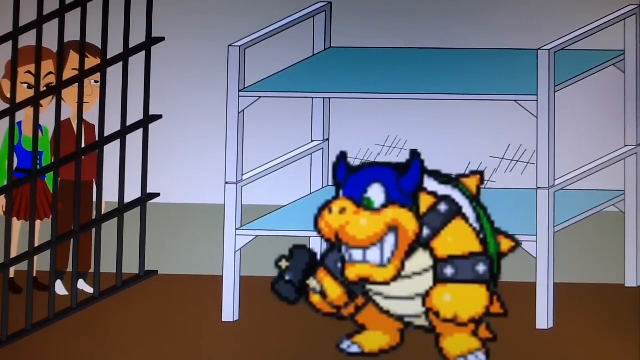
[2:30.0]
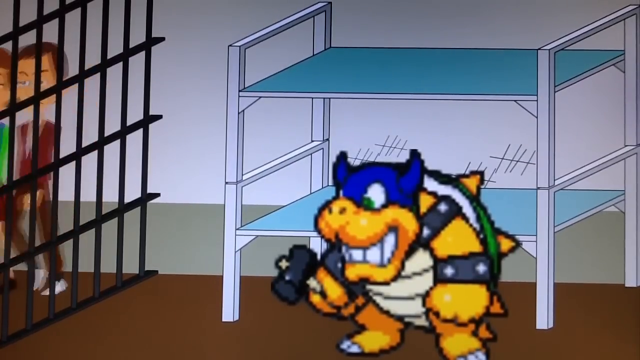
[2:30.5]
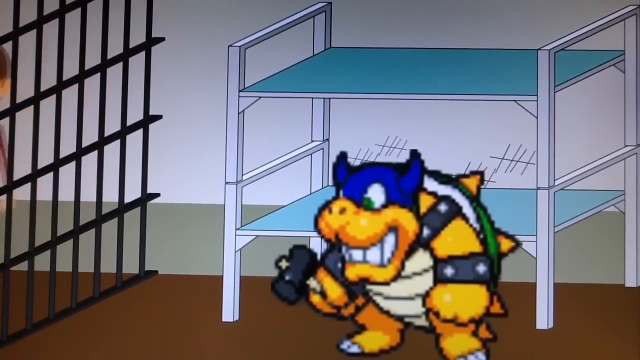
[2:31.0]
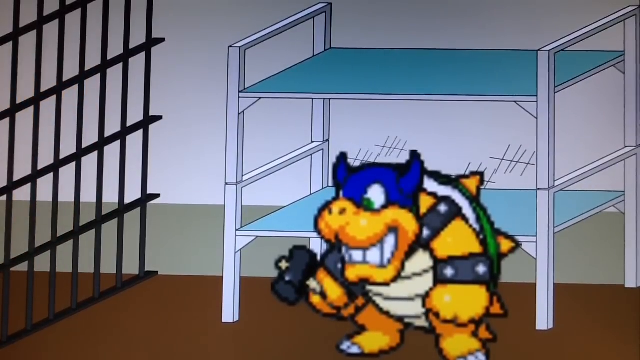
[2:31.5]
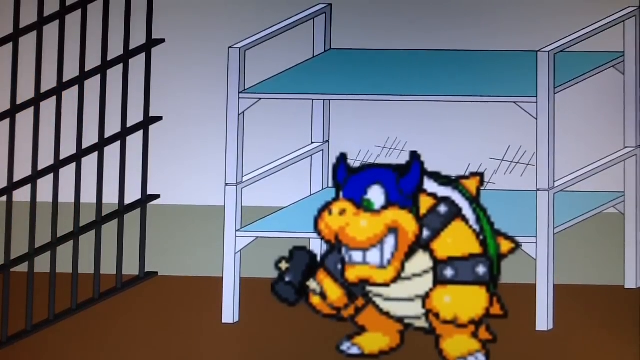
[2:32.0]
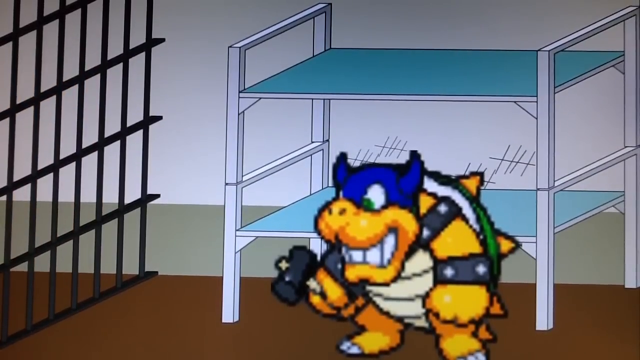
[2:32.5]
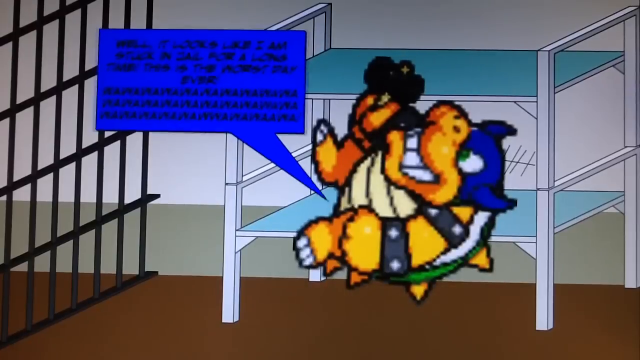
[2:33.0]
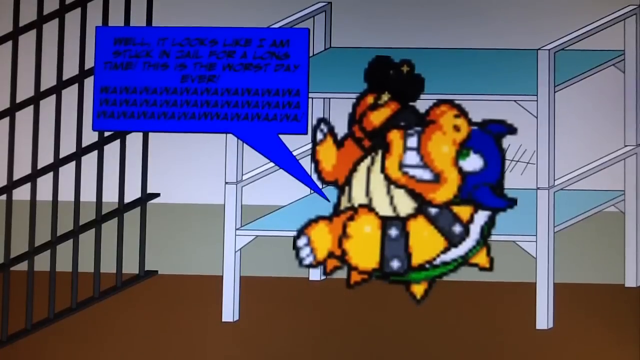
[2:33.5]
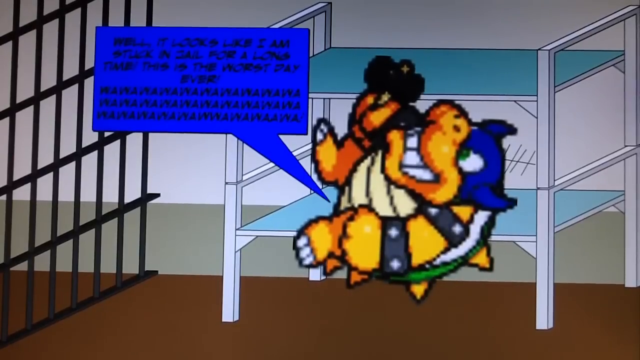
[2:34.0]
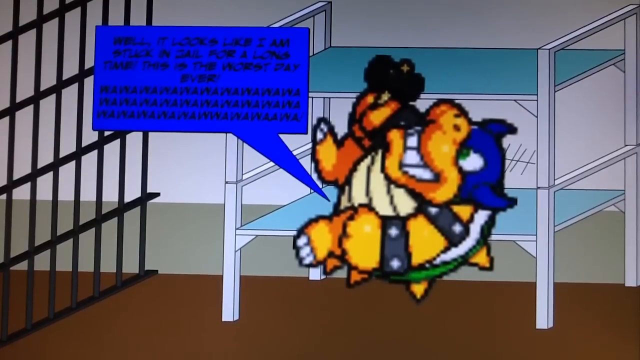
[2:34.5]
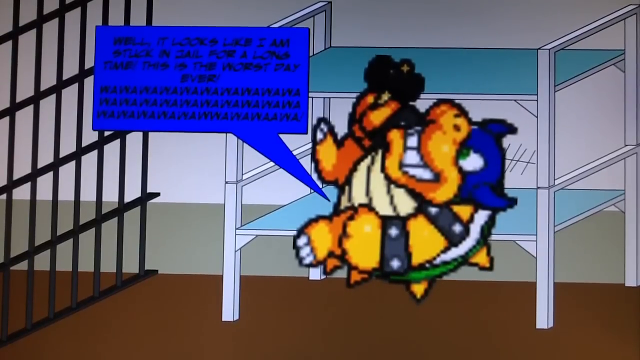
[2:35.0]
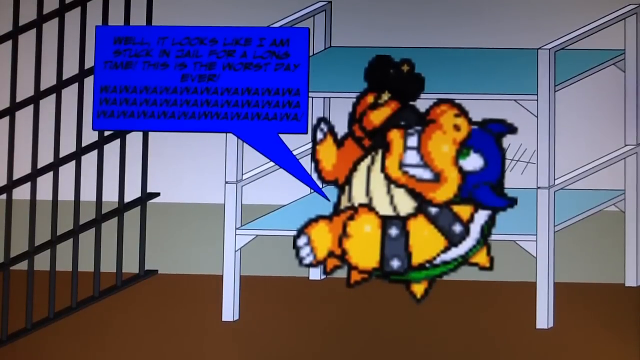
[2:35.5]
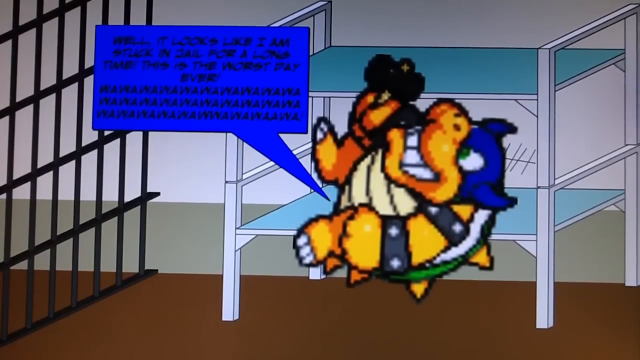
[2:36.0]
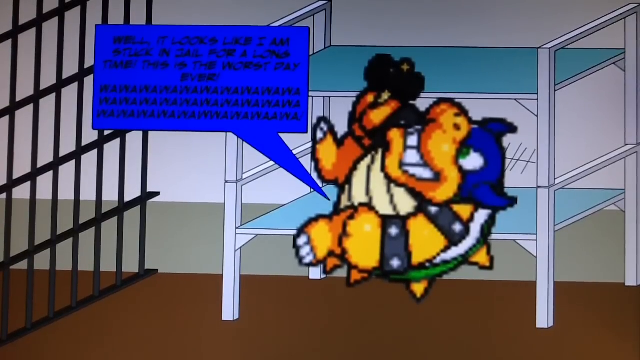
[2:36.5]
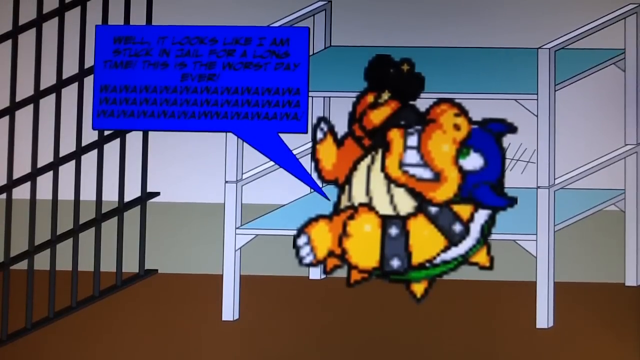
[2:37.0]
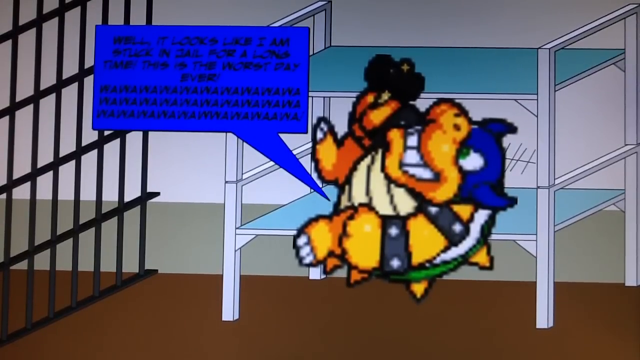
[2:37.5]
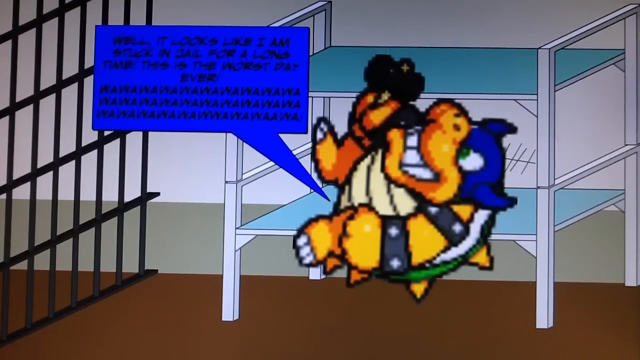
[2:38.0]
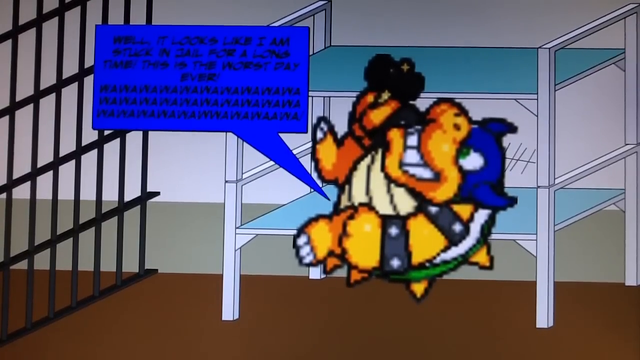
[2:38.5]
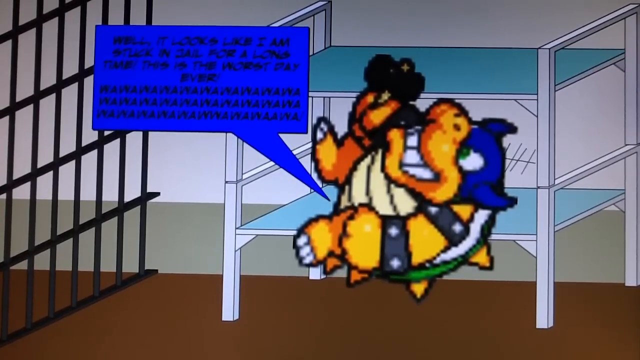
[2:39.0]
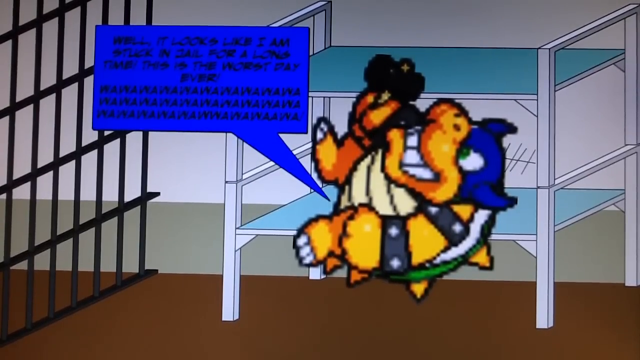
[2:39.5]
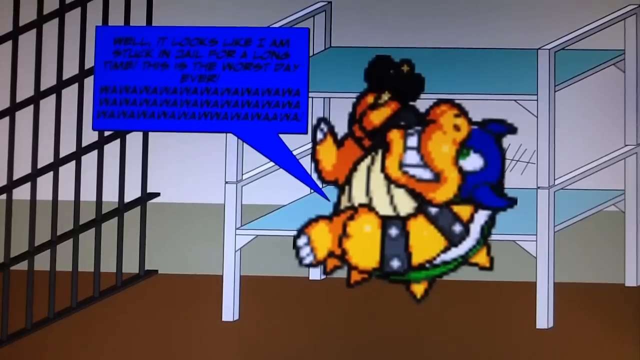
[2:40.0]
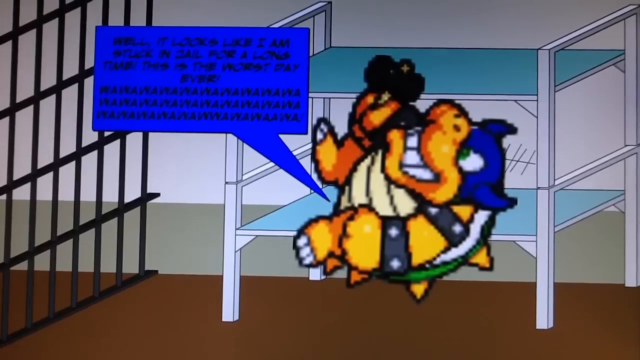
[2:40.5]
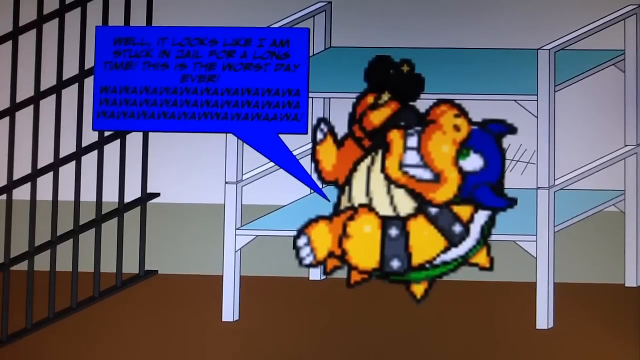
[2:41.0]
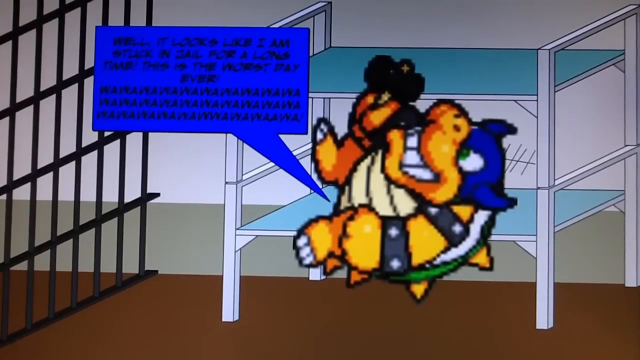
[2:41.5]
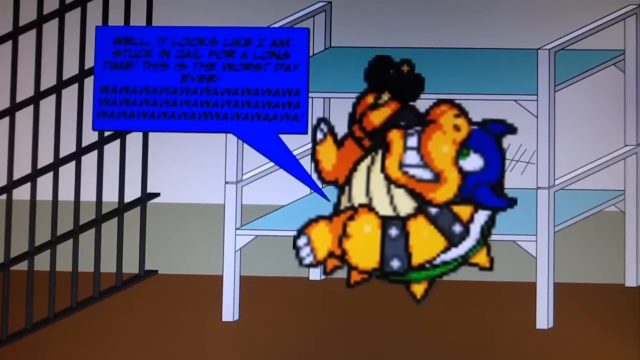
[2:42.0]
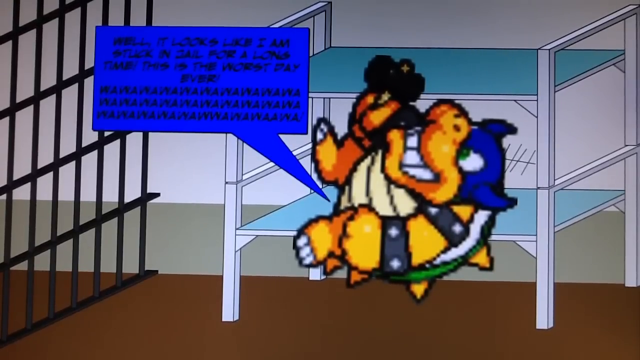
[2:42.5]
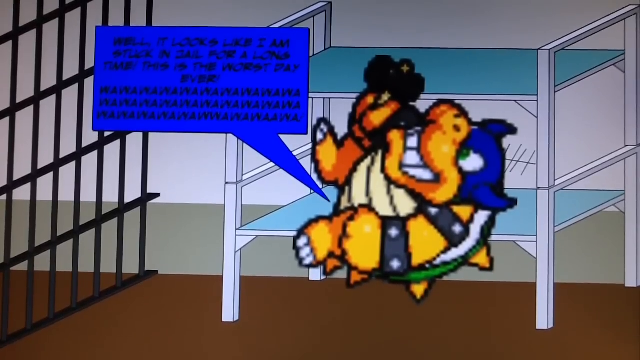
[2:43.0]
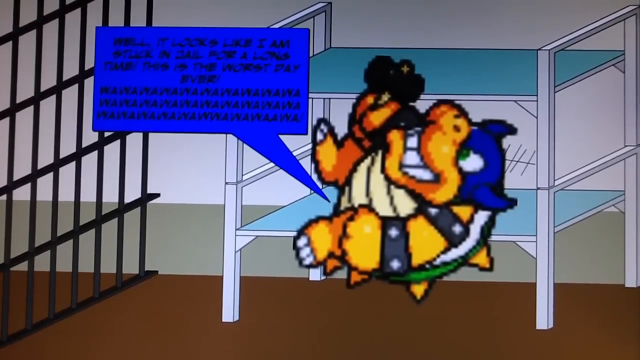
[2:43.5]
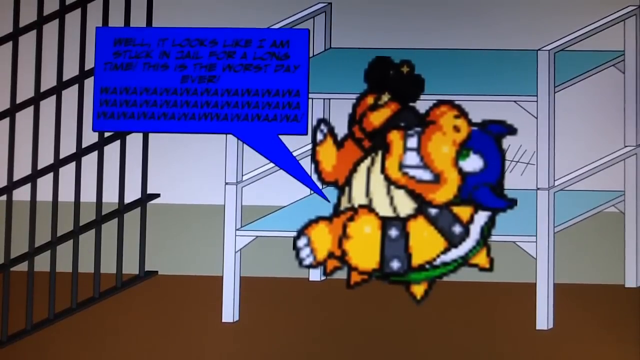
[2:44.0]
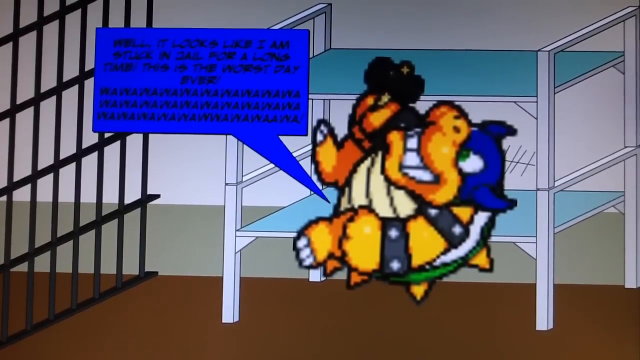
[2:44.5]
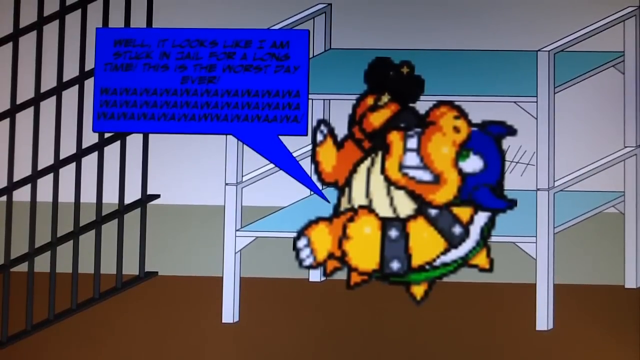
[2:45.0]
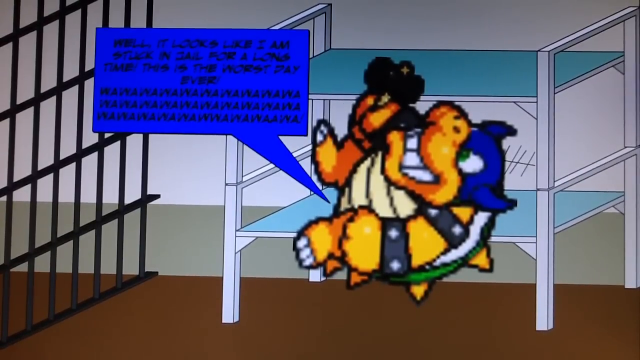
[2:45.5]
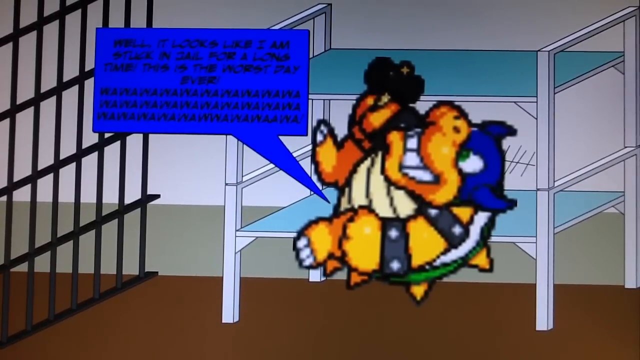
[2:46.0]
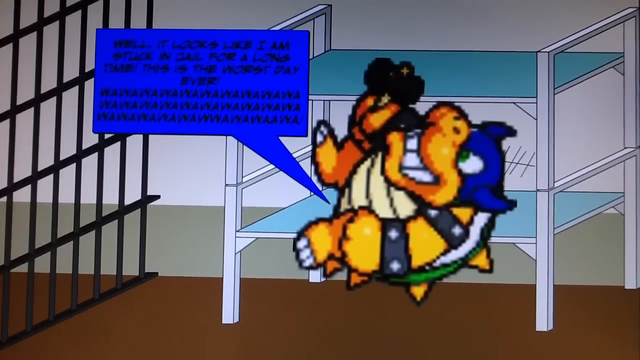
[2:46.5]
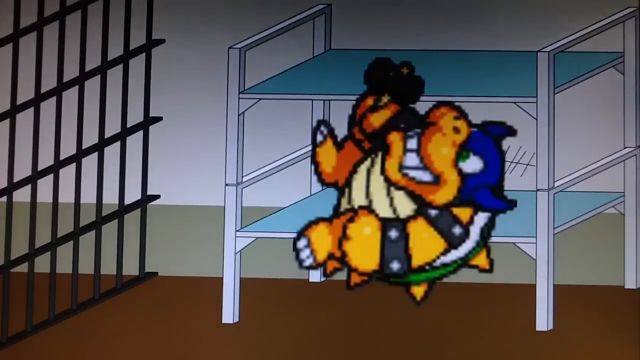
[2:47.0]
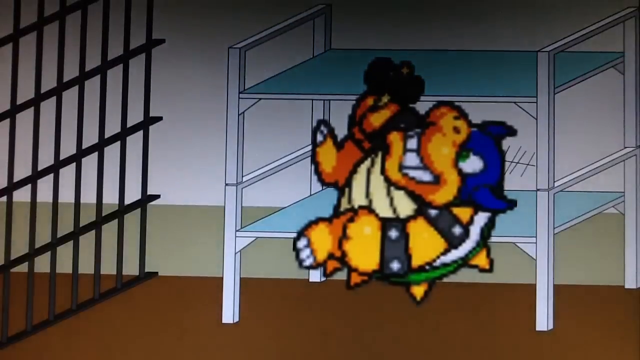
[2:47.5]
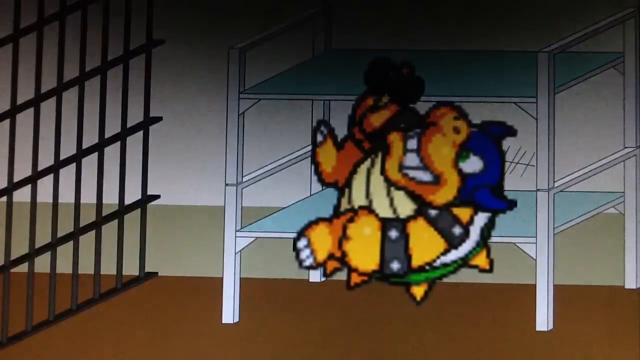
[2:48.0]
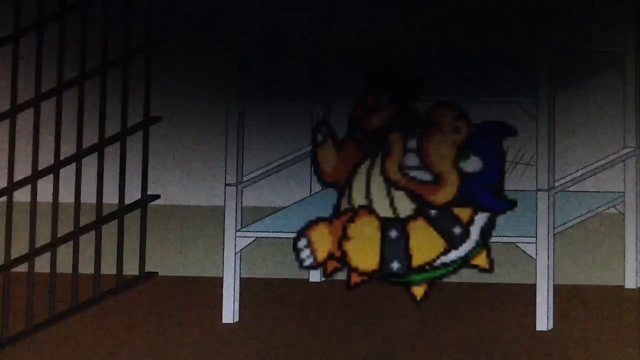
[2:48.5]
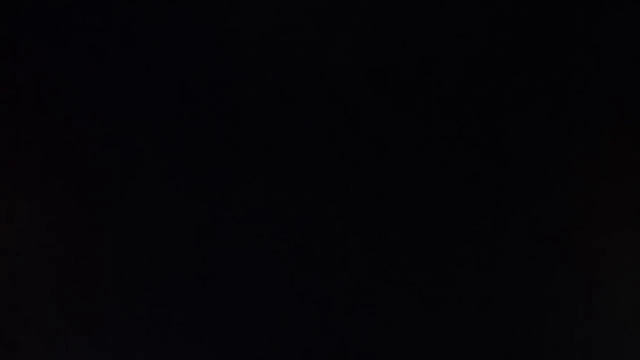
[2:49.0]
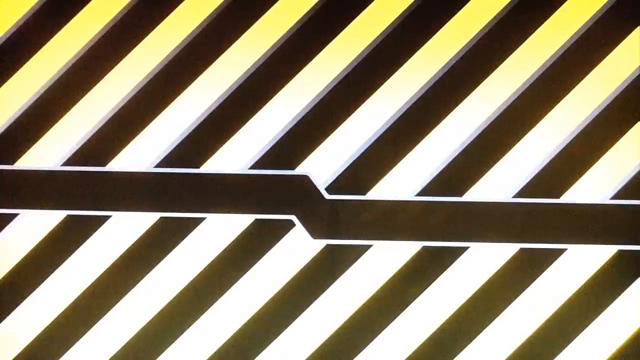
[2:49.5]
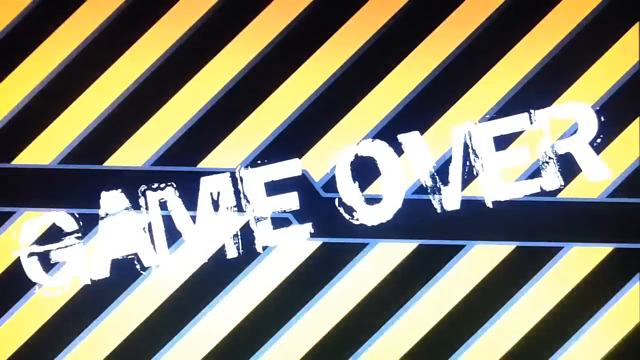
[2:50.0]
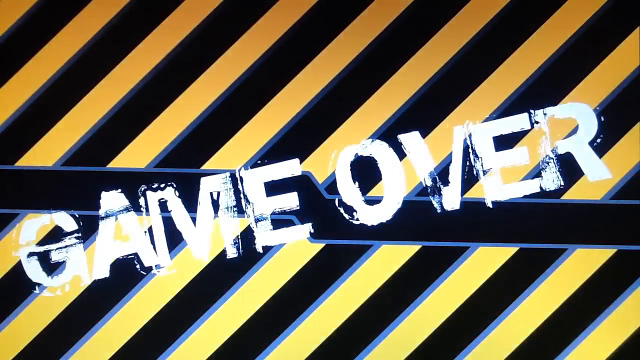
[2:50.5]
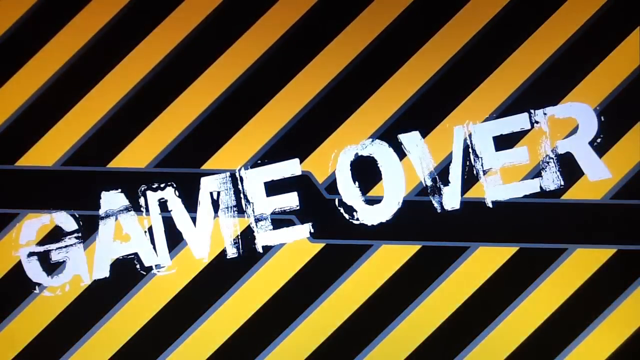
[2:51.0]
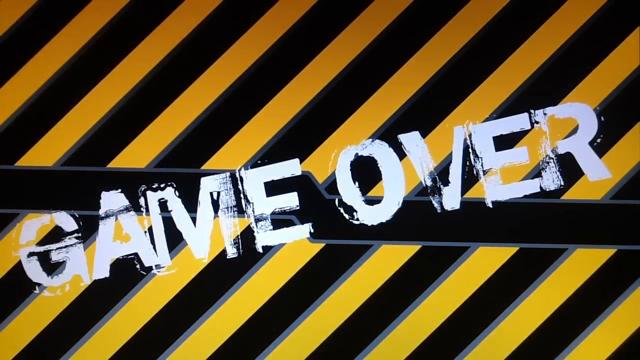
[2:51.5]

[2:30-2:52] Rookie's parents, standing outside the bars of the cell, turn to the left and walk out. Rookie is now on the bottom bunk; his face and everything else about him is unchanged except his position: instead of standing upright, he is turned to the side as if lying on his back, with his feet facing left. The background is flat, and the characters do not interact with it, making it clearly two-dimensional. The spikes on his shell are still visible, and he still holds the hammer. His skin is yellow, with a green shell with yellow spikes attached to his back by straps on his arm, and he has white toenails. A blue square call-out box says, "Well, it looks like I guess I am back in jail for a long time, this is the worst day ever." It then seems to say "ha ha ha" or possibly "waa waa waa"; the writing is hard to read at this resolution. The video ends with black and yellow diagonal lines and white text that looks like spray paint reading "Game Over."